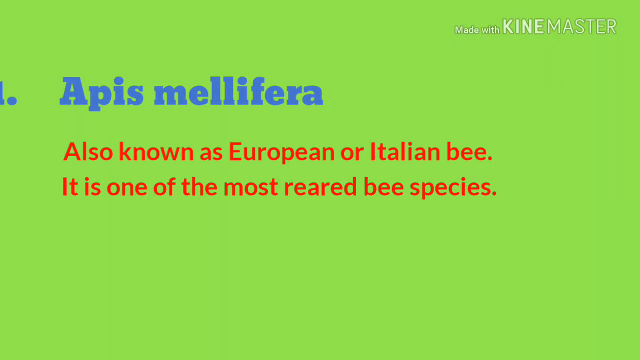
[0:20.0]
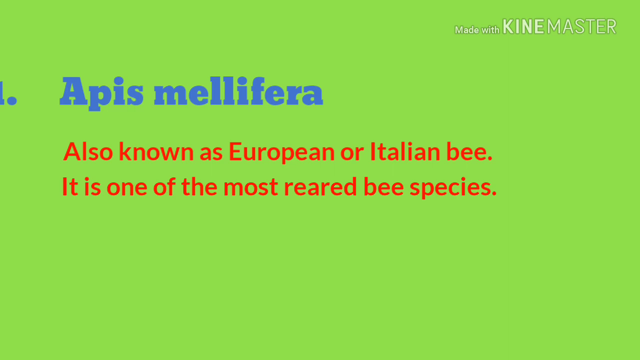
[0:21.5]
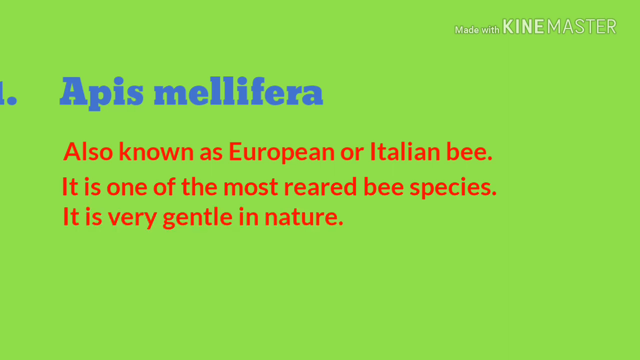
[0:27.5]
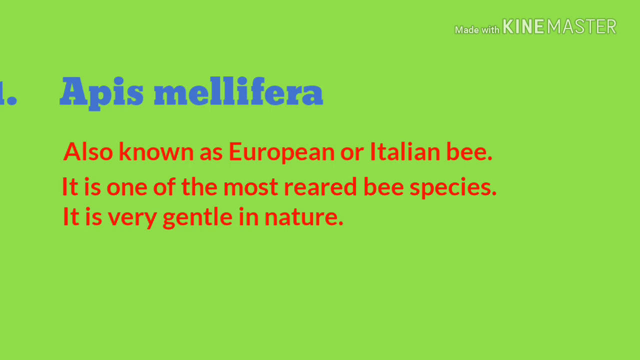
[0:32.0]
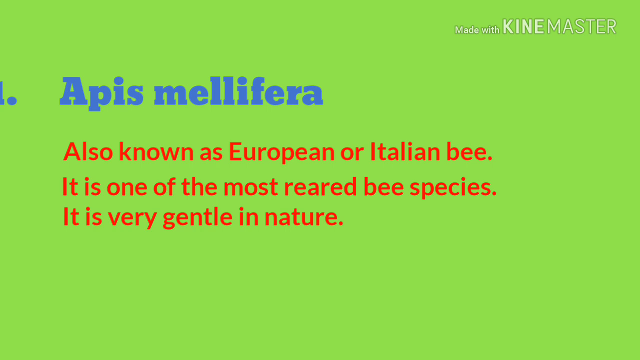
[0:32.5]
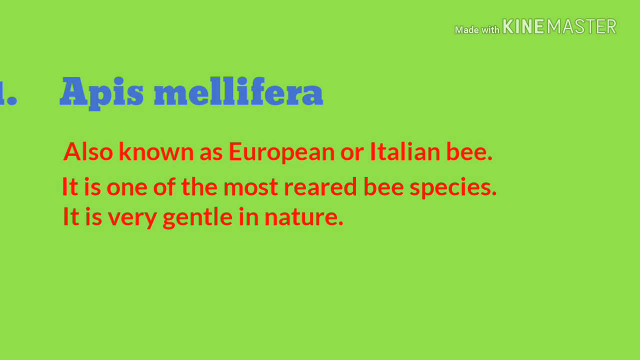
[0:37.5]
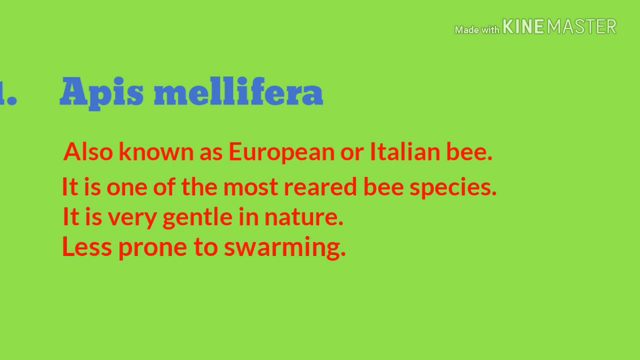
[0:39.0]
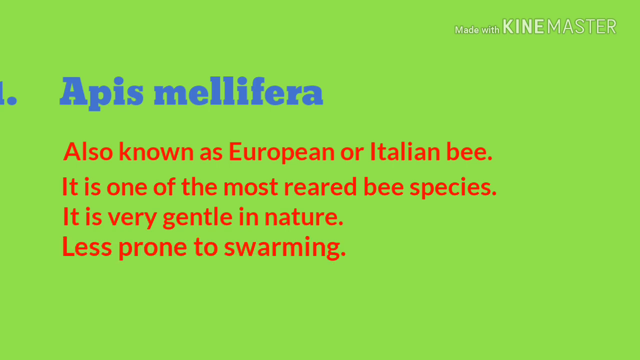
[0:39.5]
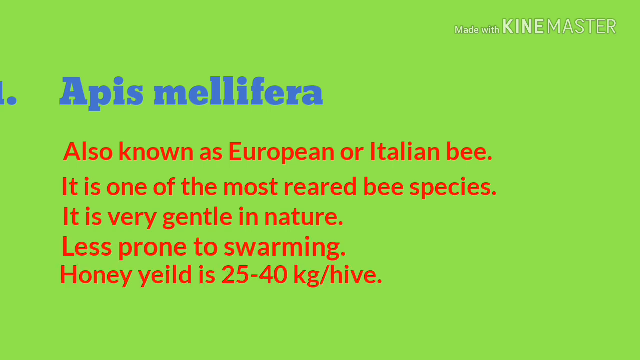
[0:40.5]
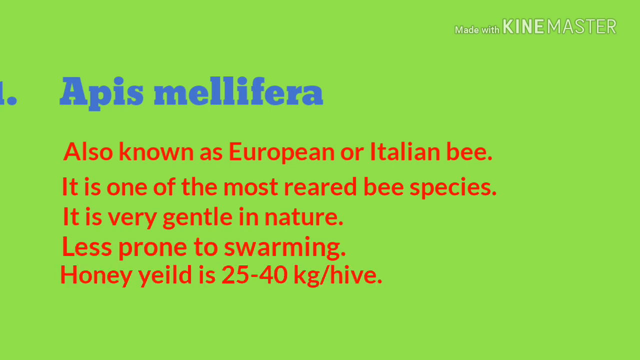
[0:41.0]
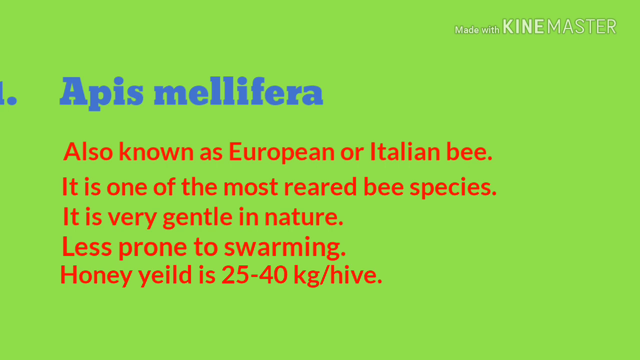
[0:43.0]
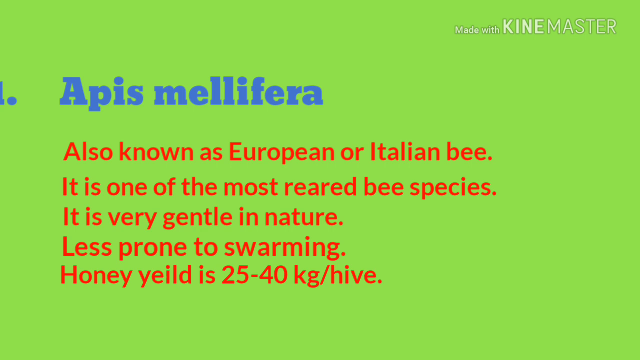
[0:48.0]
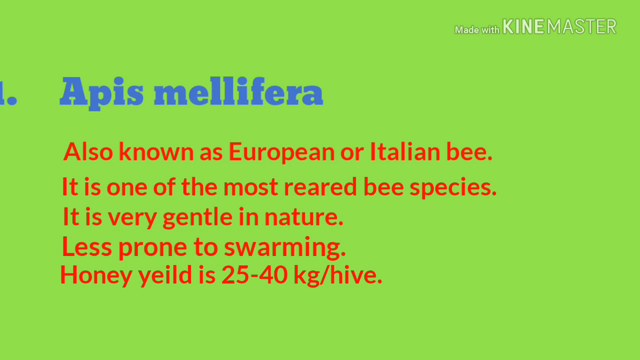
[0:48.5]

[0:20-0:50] On the green background, a number one with a dot precedes "Apis mellifera", written in blue. Lines of text in red follow: "also known as European or Italian bee", "It is one of the most reared bees species" and "it is very gentle in nature". Bees are on the floor with honeycomb and honey; they have black lines on the abdomen, black heads and wings. At the top right of the video it says "made with kine master" in white. Further text reads "less prone to swarming" and that the honey yield is "25 to 40 kg", with "yield" spelled "yeild". This is followed by "/ hive", all in red on the green background.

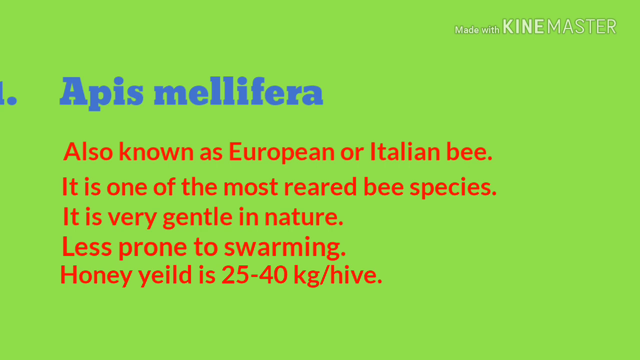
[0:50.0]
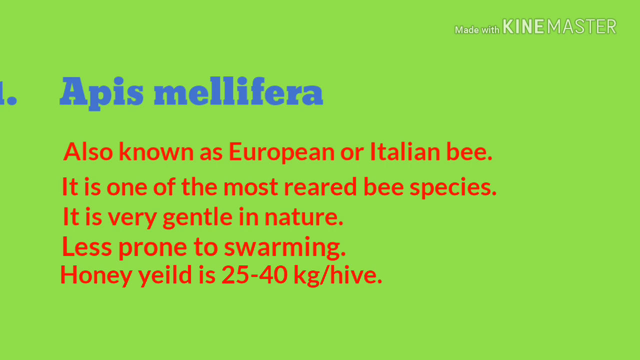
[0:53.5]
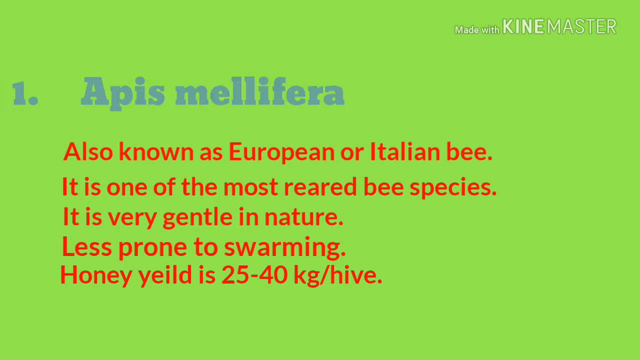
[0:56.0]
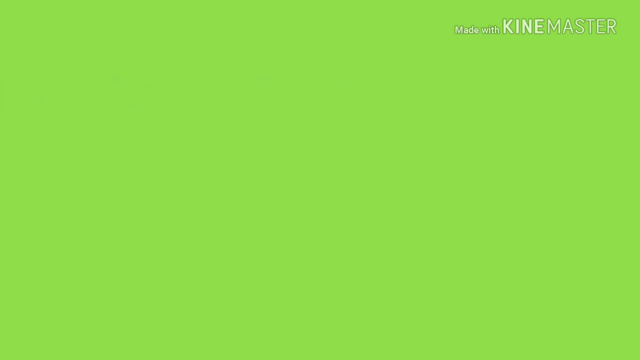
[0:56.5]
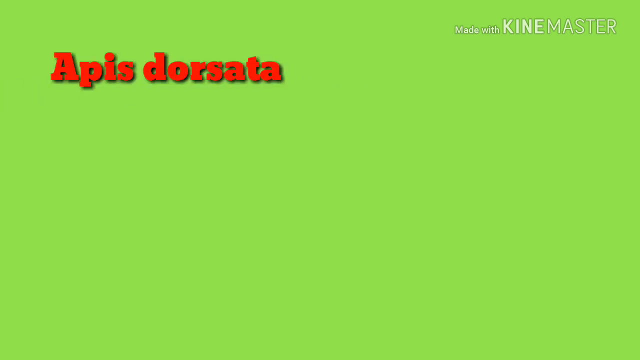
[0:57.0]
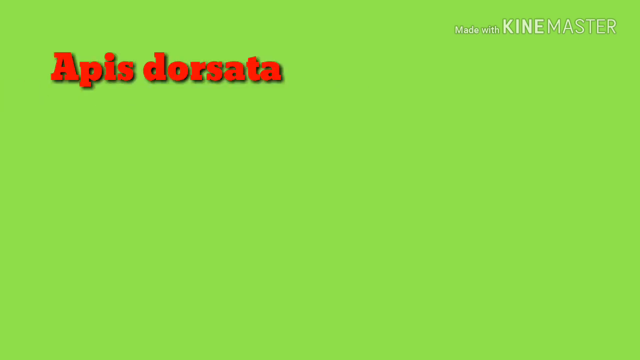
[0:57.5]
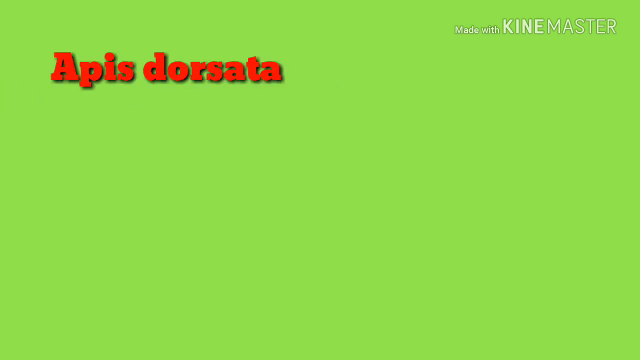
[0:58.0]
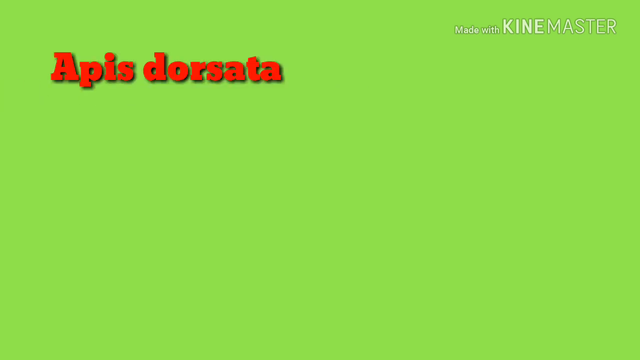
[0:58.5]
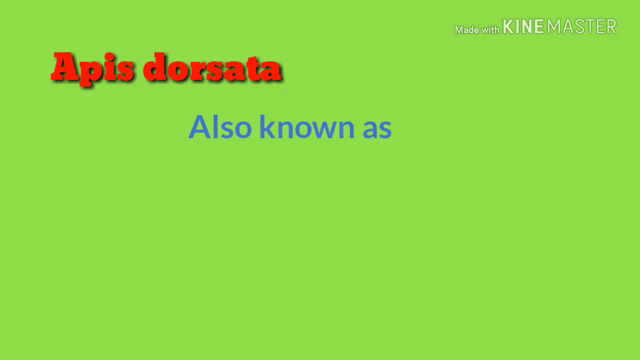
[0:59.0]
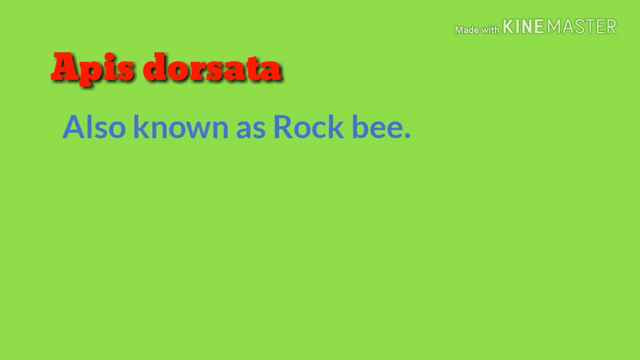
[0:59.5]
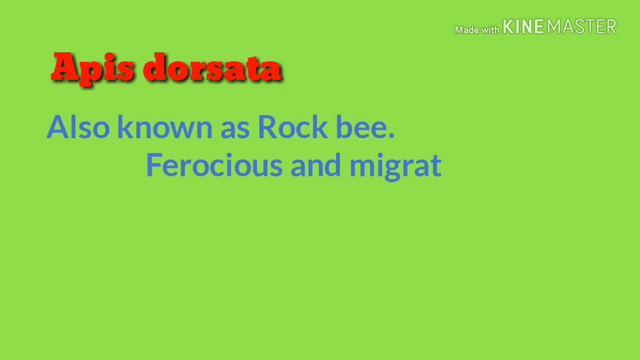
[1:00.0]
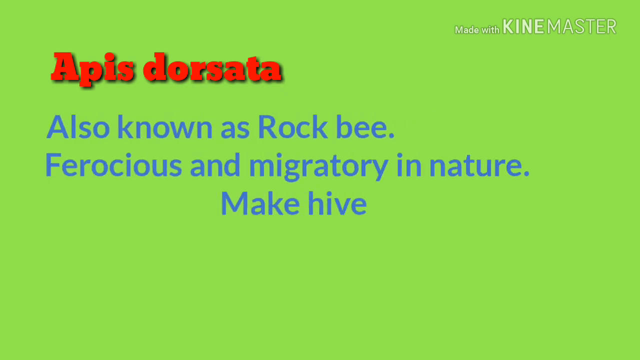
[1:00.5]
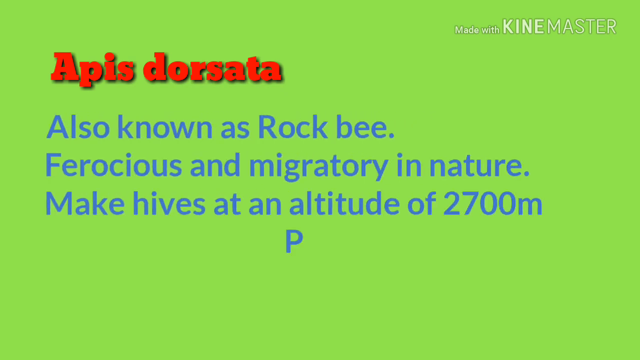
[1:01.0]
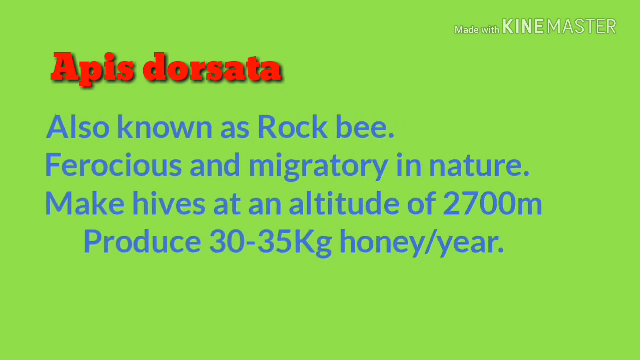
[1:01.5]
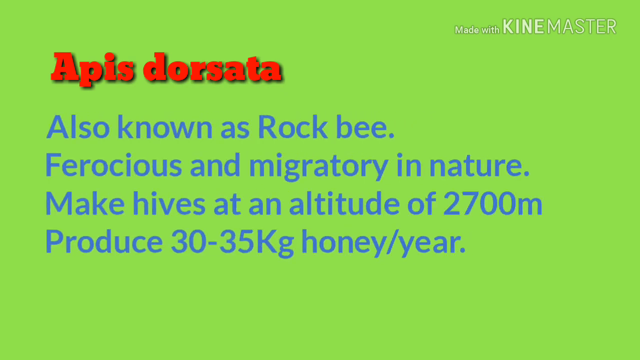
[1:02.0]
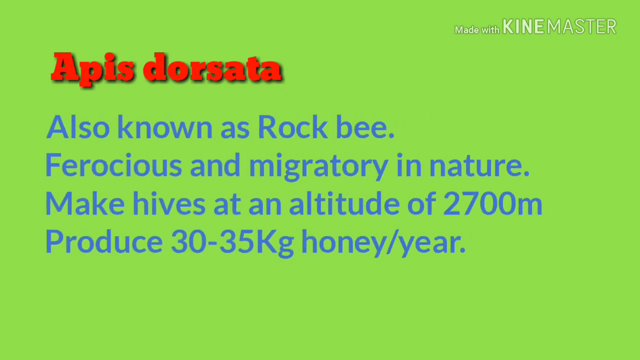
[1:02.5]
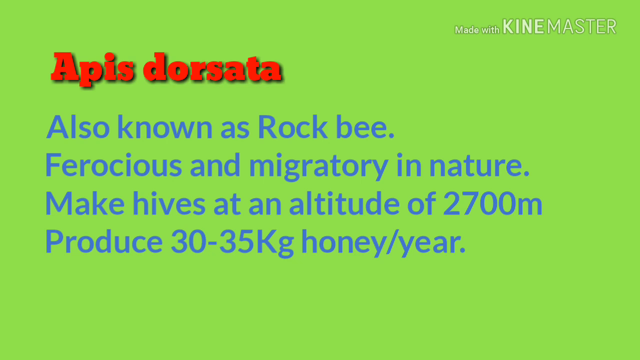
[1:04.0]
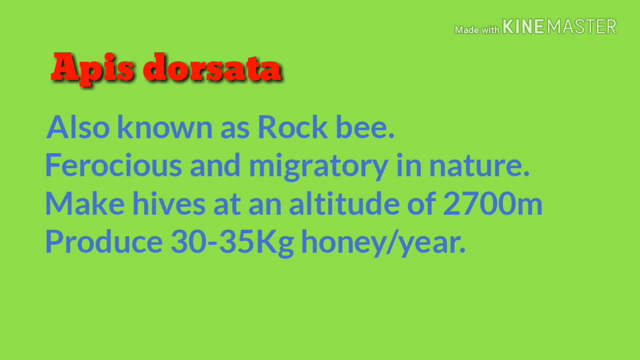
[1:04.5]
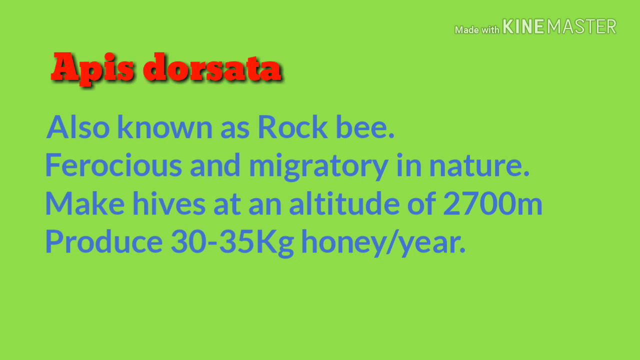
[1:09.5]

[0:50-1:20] A blue "1." appears with "Apis Melifera", also in blue. At the top right corner it says "Made with Kine Master" in white. Below "Apis Melifera", points in red read "also known as European or Italian bee", "It is one of the most rare bee species", "very gentle in nature", "less prone to swarming" and a yield of "25-40 kg" per hive. The video transitions to more text: "Apis Dorsata" in red on a green background, then lines in blue that fade in: "also known as rock bee", "ferocious and migratory in nature", a line about an altitude of "2700m", and "produce 30-35 kg honey per year".